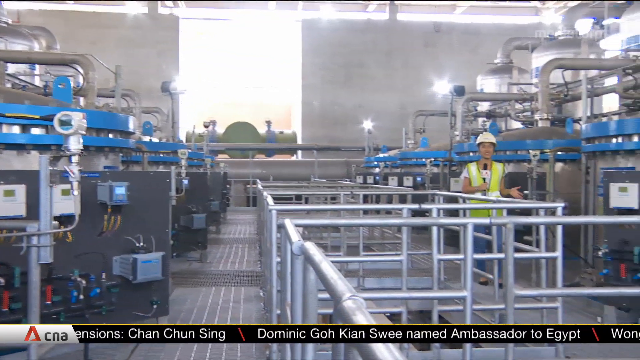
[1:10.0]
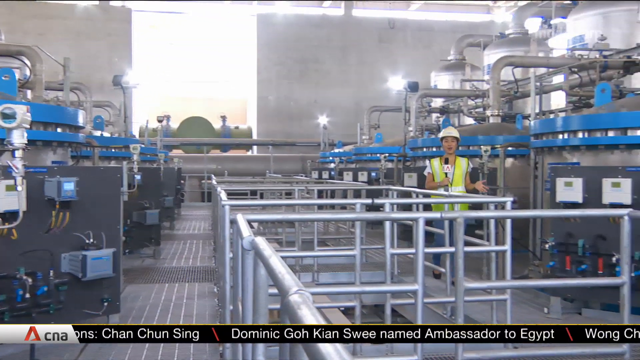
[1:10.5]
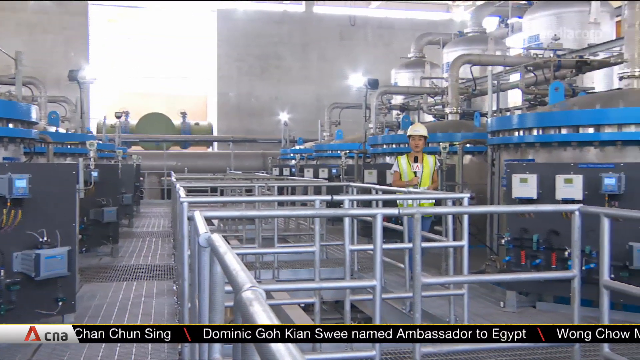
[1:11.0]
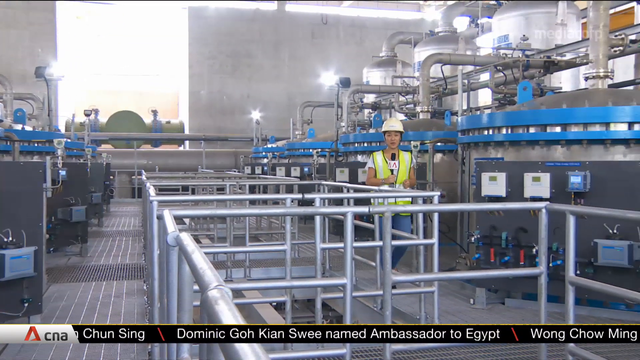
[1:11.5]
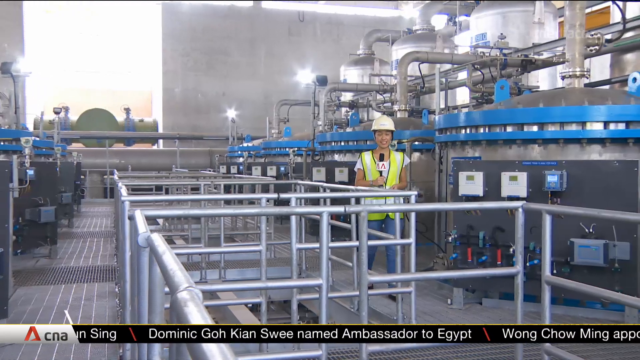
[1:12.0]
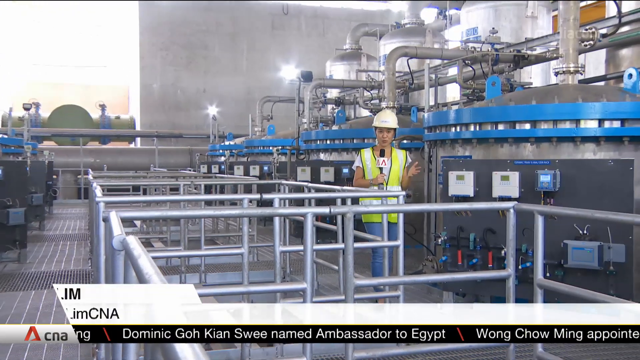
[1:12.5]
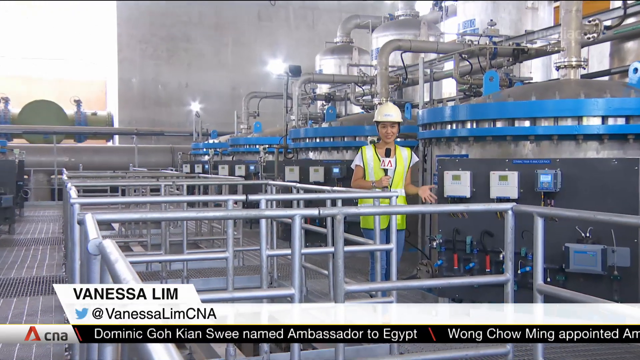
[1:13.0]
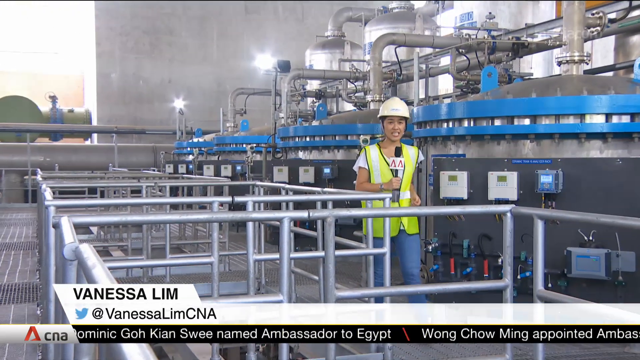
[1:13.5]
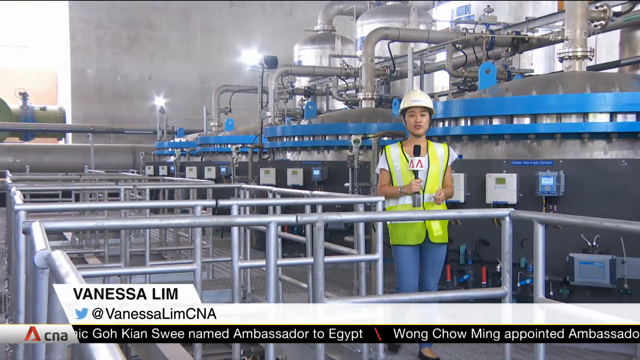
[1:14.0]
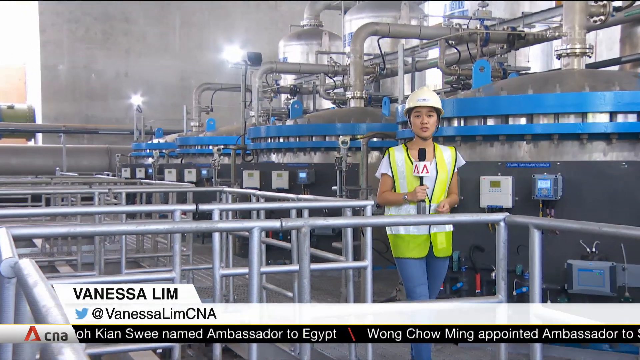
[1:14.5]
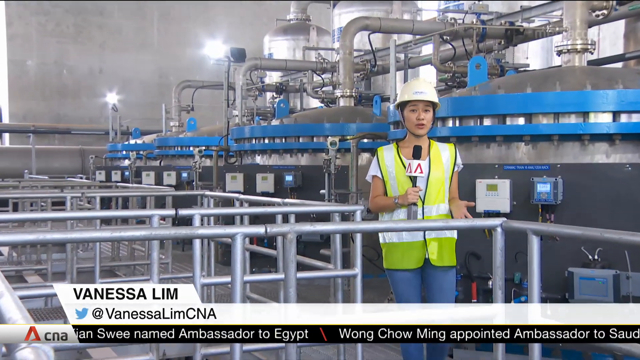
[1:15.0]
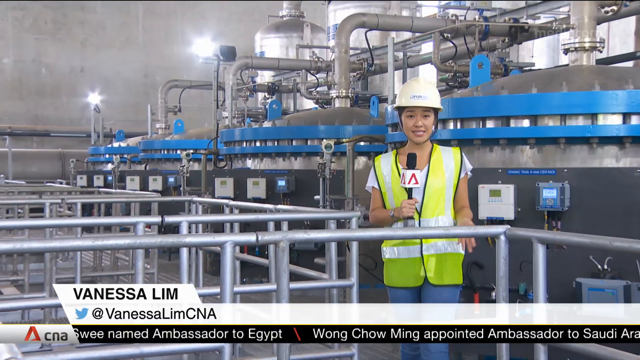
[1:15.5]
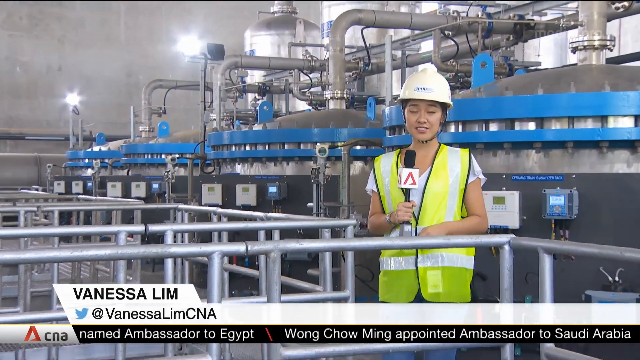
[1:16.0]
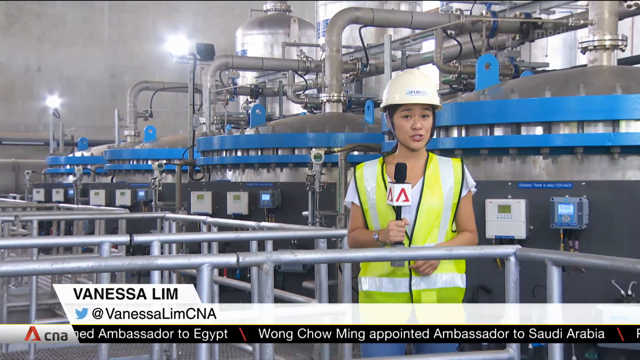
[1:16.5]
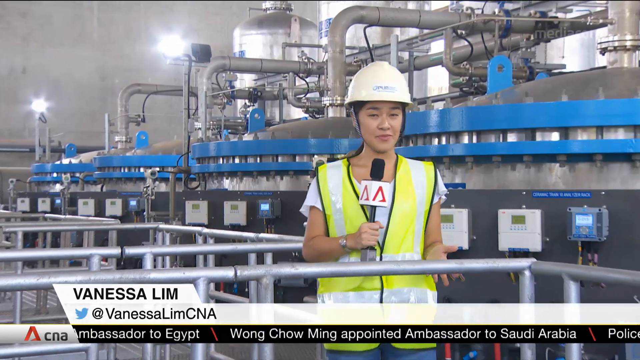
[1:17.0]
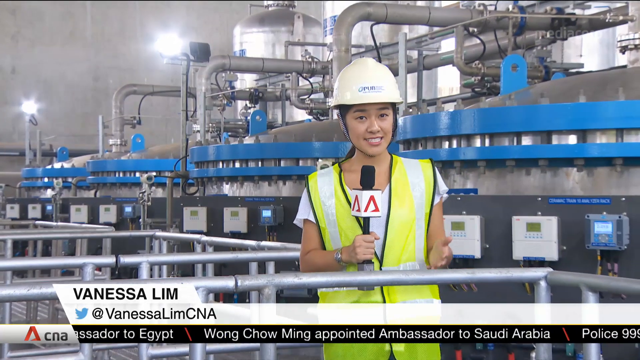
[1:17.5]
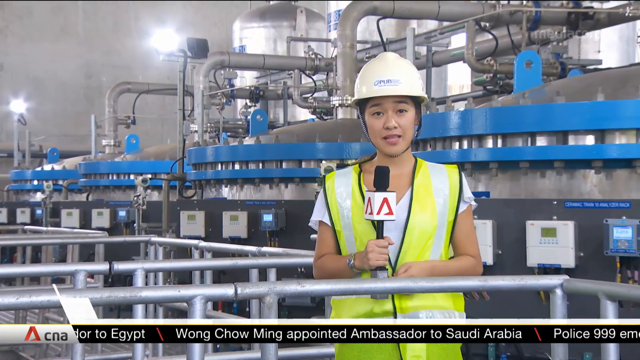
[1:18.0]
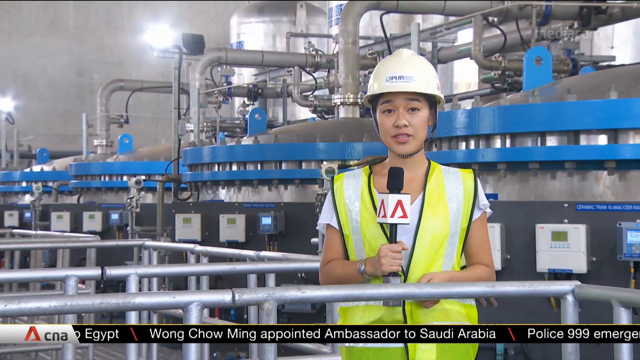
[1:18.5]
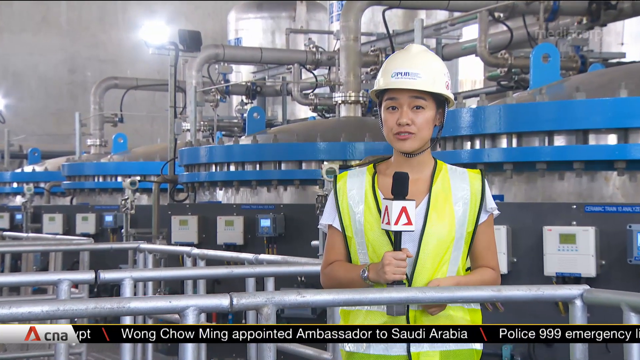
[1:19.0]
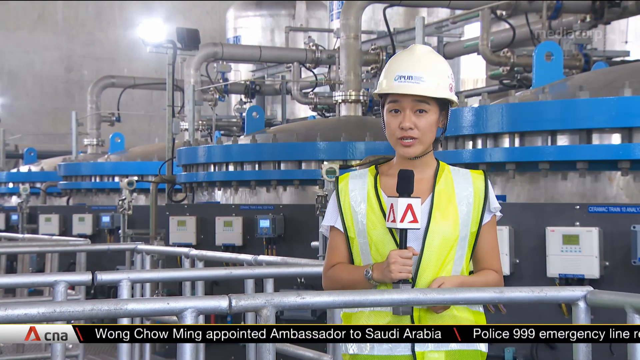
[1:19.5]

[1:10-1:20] On the floor of the waterworks is a series of big metal tanks with blue lids, with metal pipes going in between them, and railings. The reporter, Vanessa Lim from CNA, stands toward the right of the screen wearing a hard hat and a high-vis vest, holding a microphone and talking. As she talks, the camera pans to the right and she walks toward the camera, talking directly to it, with the mic in her right hand while she moves her left hand.